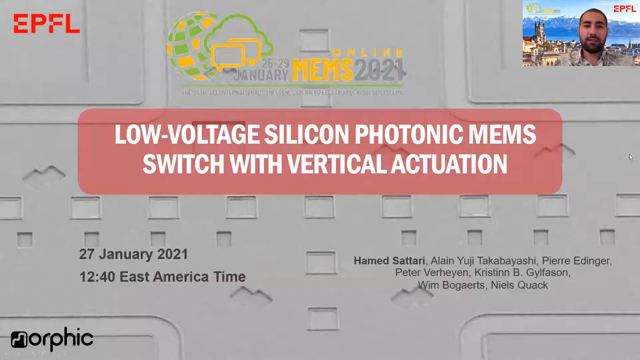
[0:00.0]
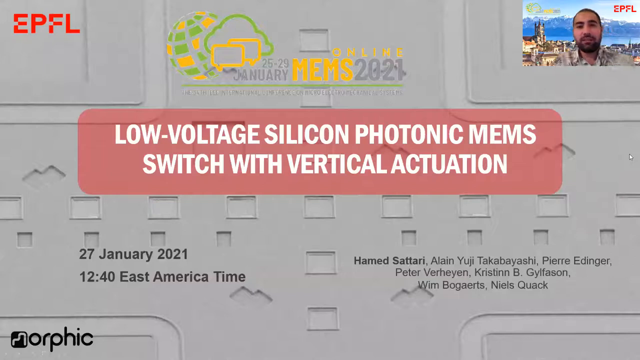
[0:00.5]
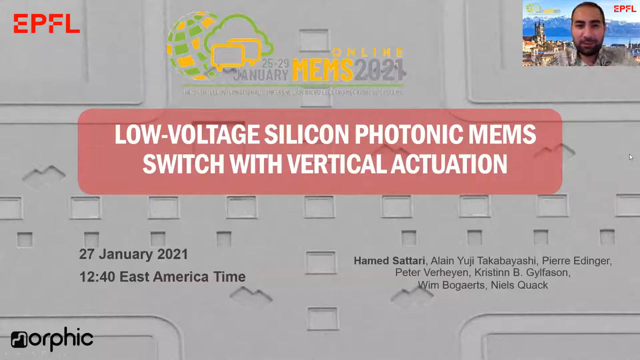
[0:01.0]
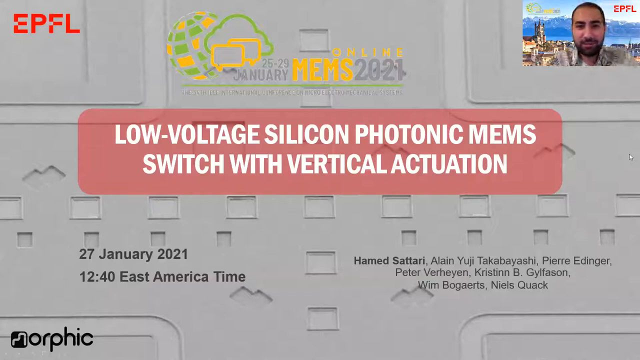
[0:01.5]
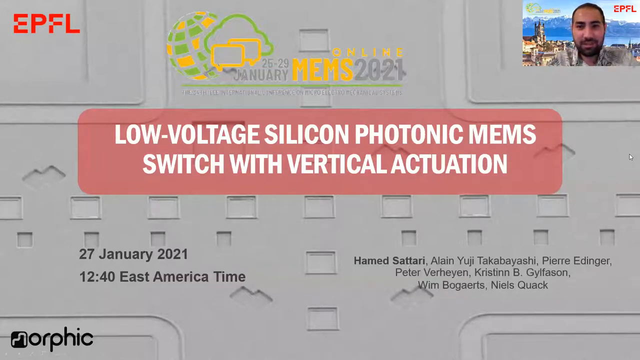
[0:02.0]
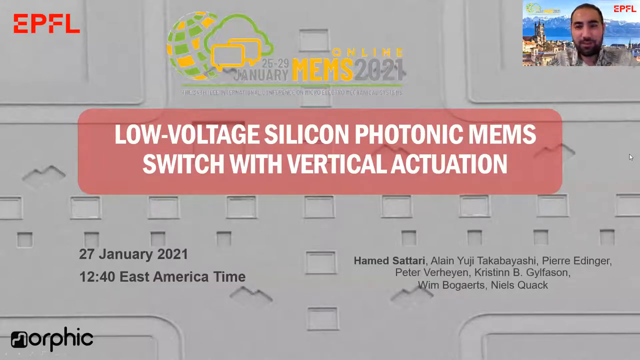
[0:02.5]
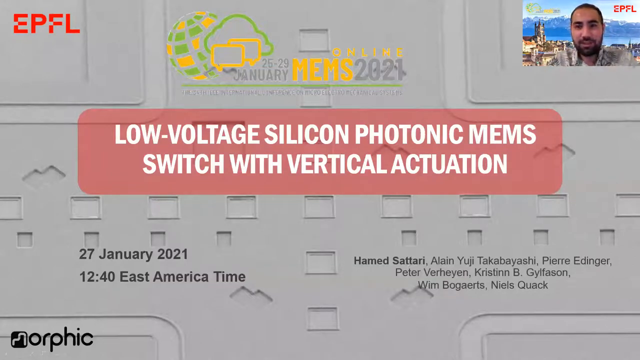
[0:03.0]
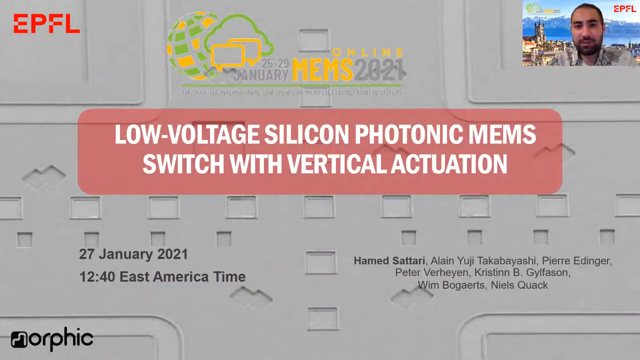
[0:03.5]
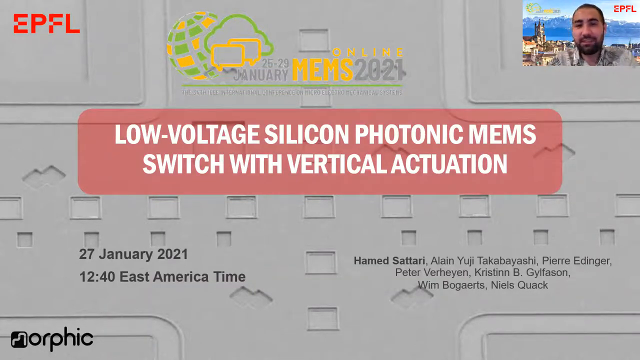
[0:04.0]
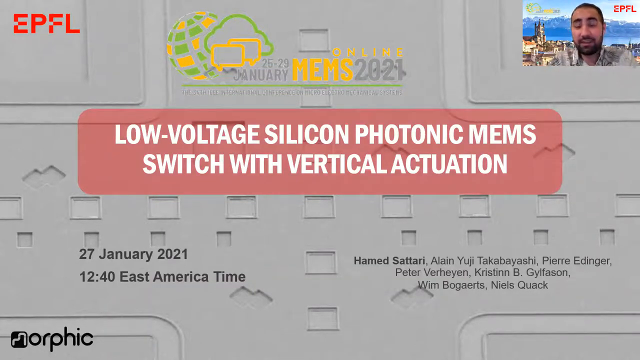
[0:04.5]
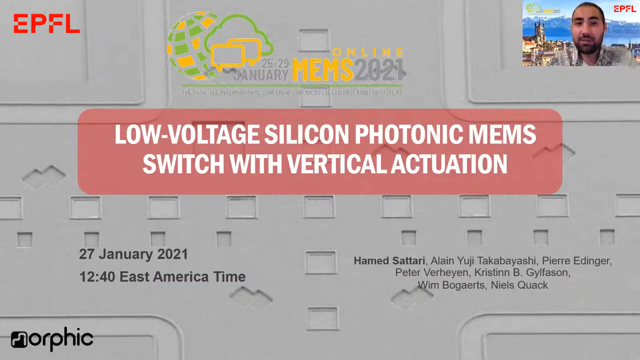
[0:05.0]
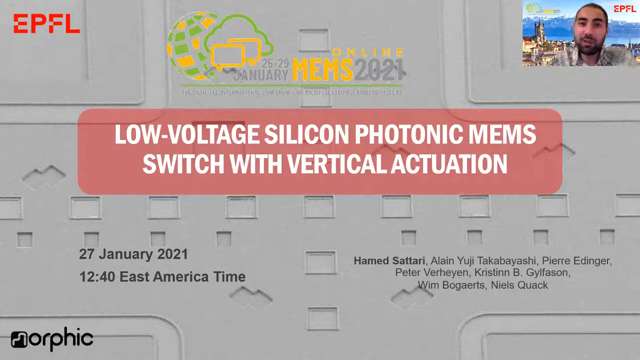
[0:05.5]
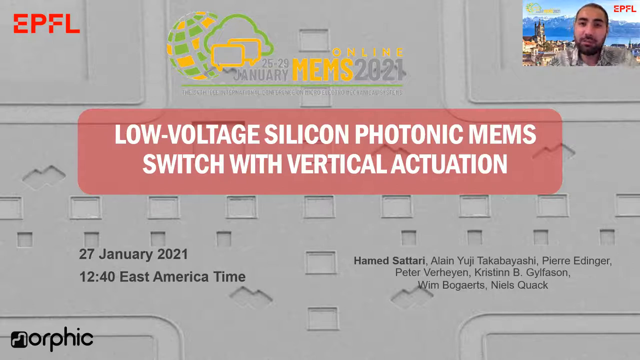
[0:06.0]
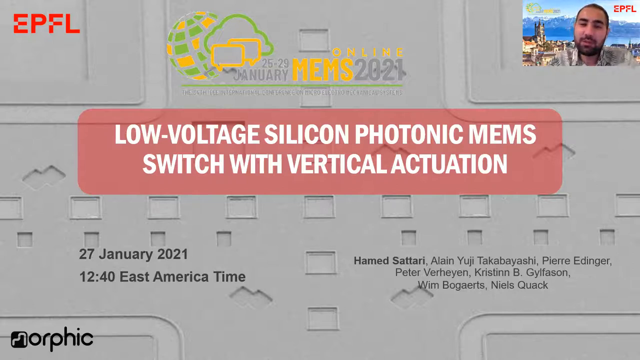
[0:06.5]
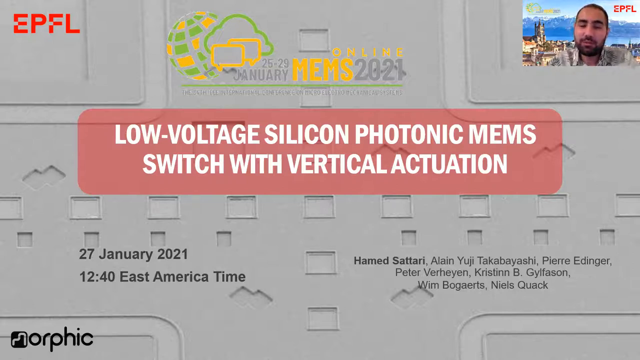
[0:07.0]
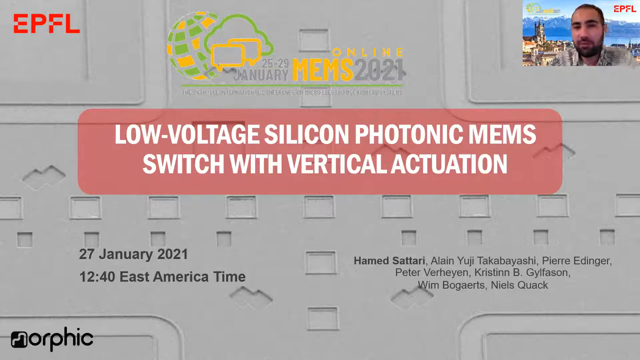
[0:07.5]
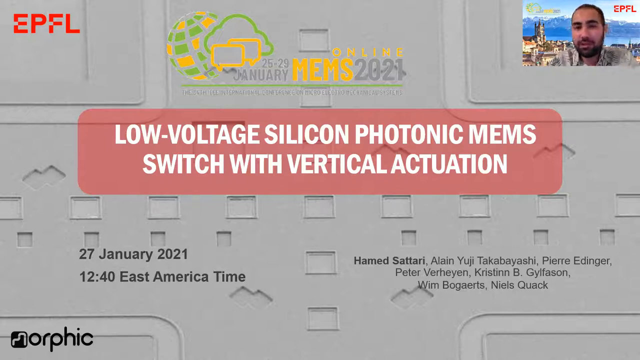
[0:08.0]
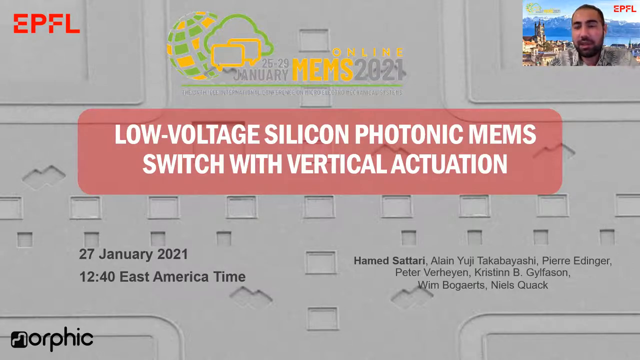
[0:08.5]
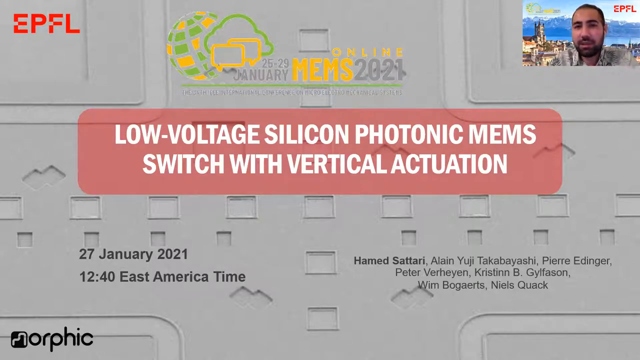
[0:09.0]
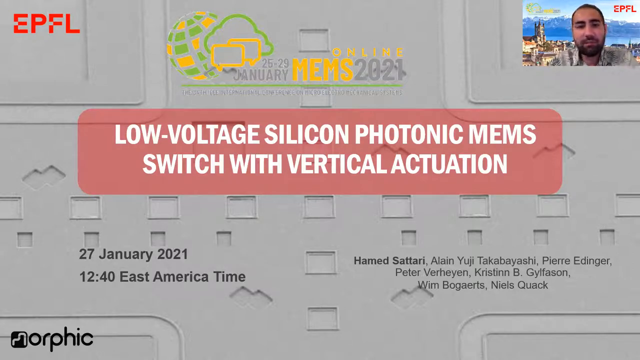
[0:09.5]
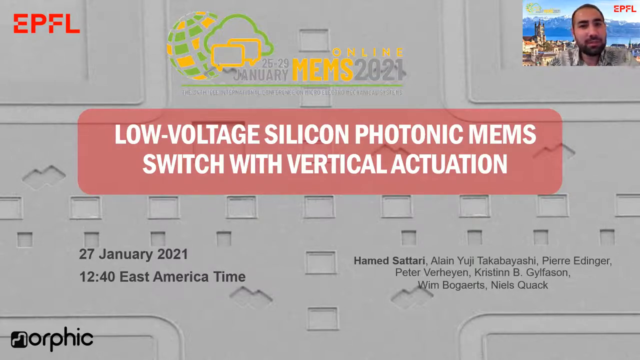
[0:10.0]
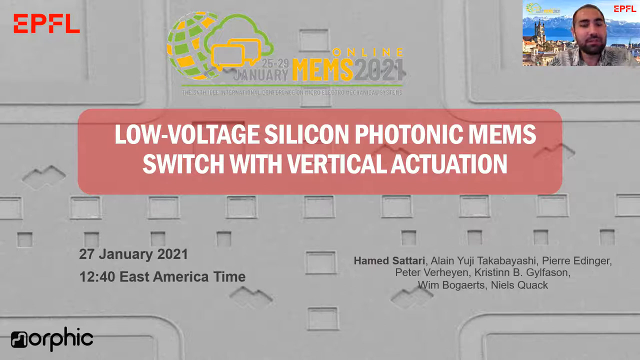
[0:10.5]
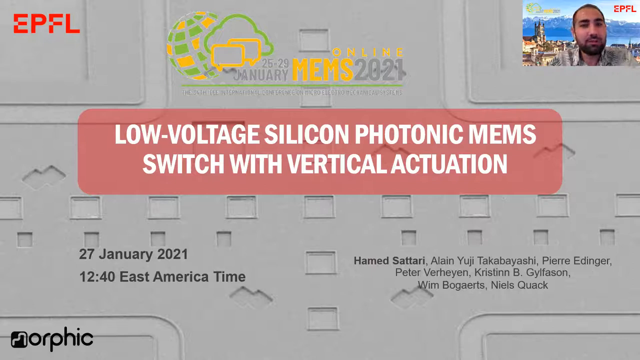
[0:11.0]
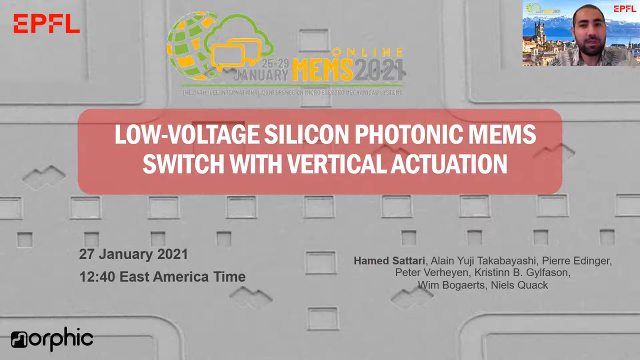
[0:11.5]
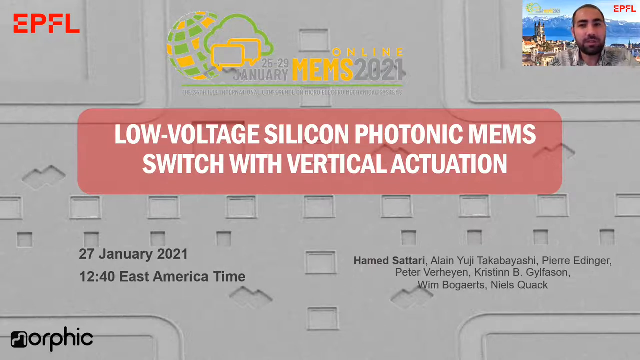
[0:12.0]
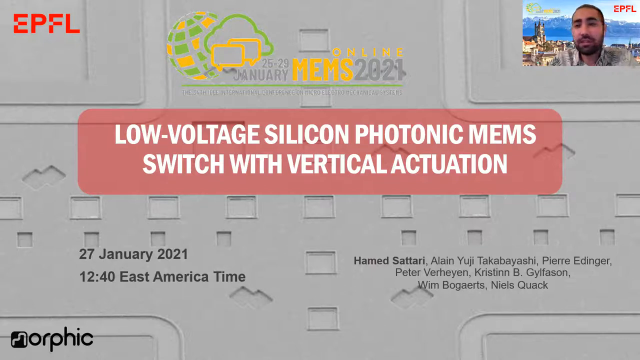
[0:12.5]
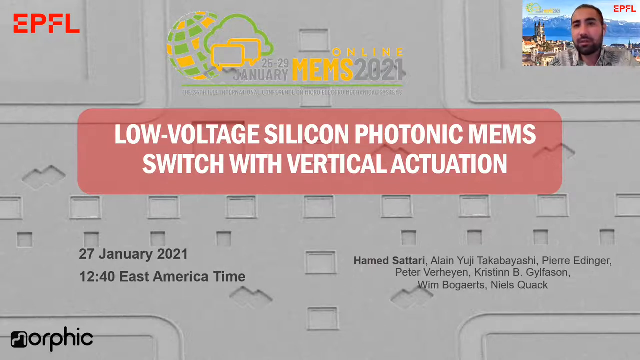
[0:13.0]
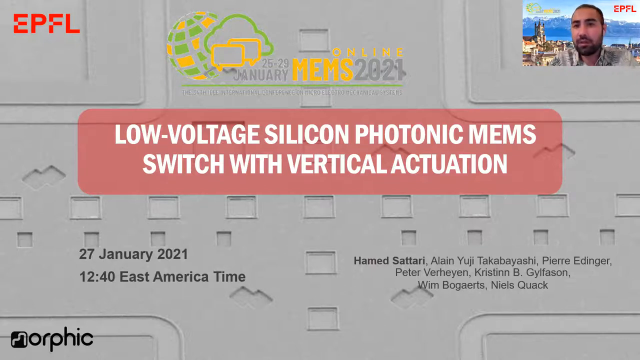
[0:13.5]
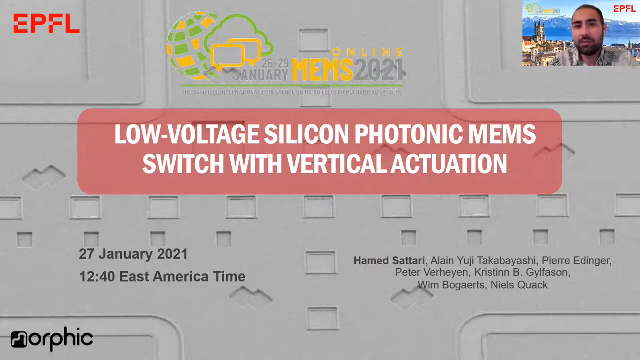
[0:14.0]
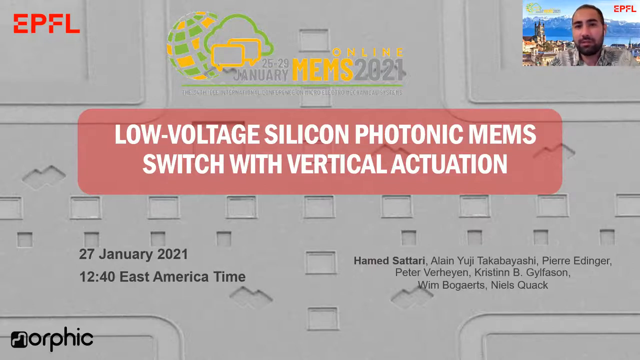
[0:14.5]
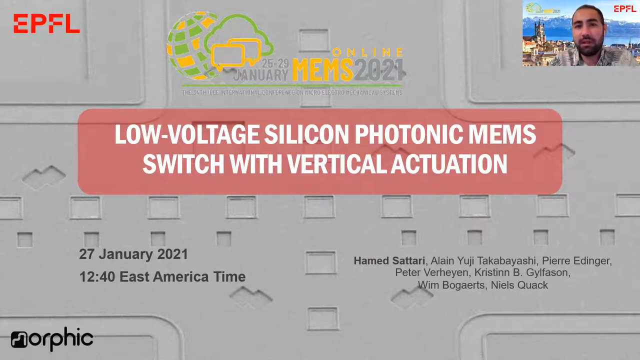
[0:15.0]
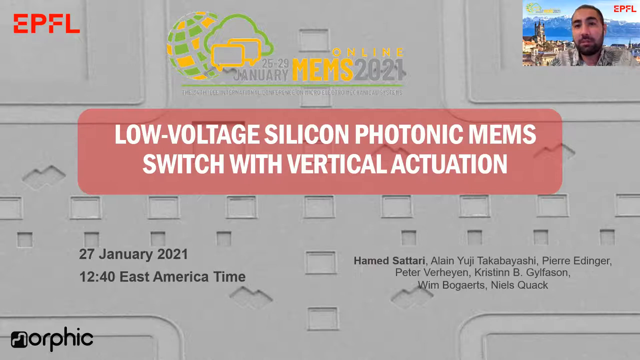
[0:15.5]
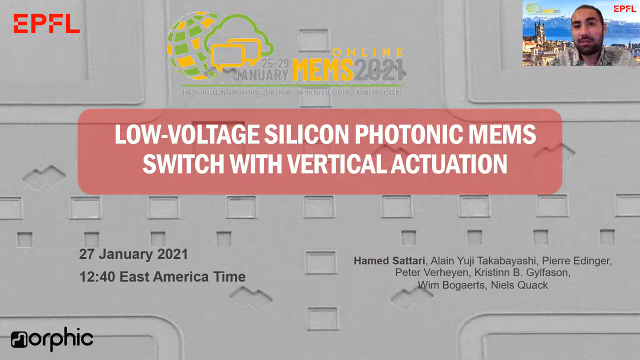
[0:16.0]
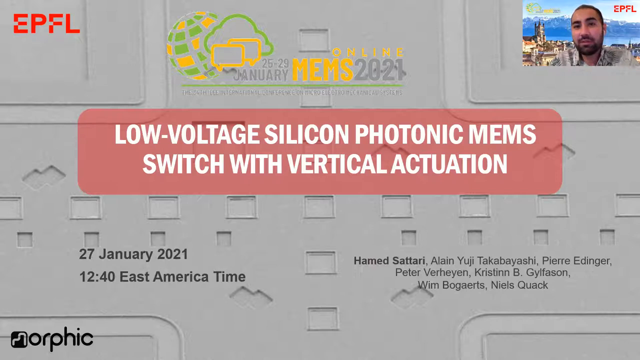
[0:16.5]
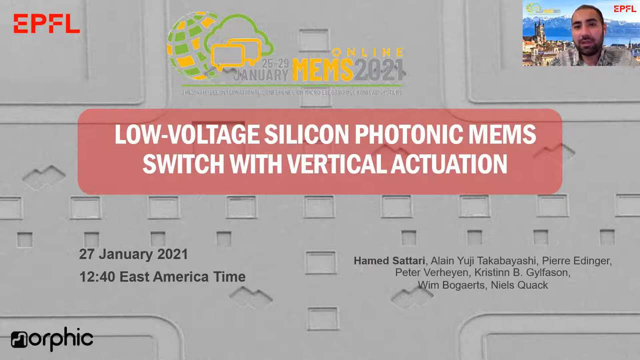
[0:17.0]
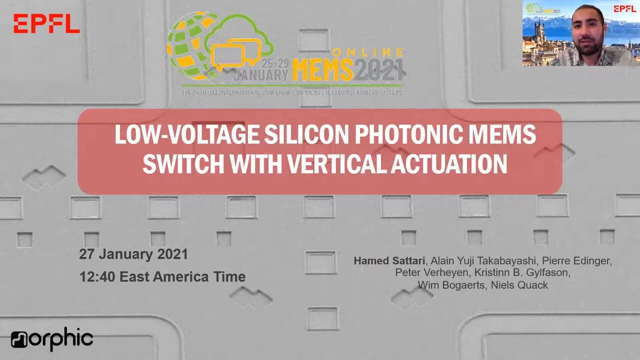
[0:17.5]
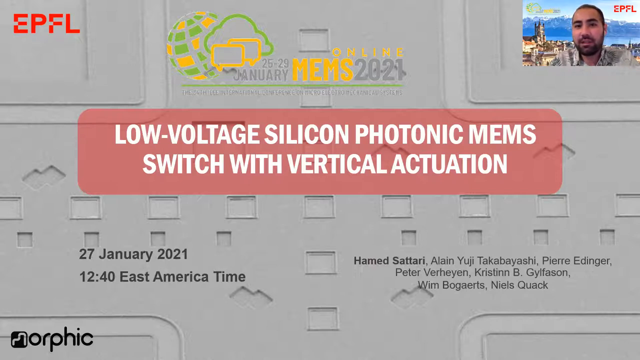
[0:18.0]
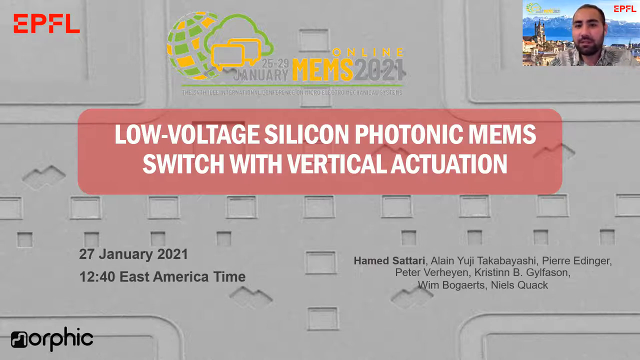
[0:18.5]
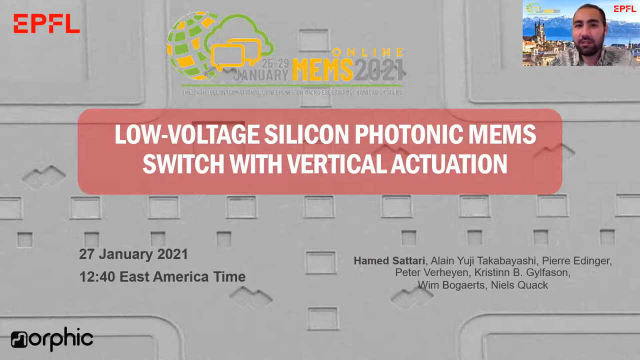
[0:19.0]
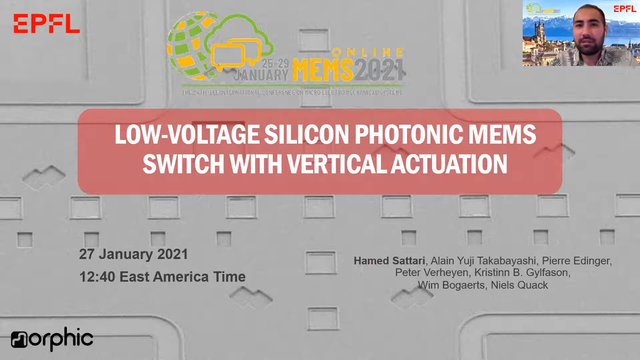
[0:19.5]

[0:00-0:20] The video opens with a screen full of information. The name EPFL, apparently a company or some sort of group, is visible, along with "online January MEMS 2021". In the upper right of the frame, a man with a beard wearing some sort of shirt is on camera, probably recording the video himself. The topic, "low voltage silicon photonic MEMS switch with vertical actuation", is written in white letters over a red background. Behind all of this is an image of what appears to be some kind of electric table or equipment for experiments. The man is talking, seemingly introducing what the video will cover.